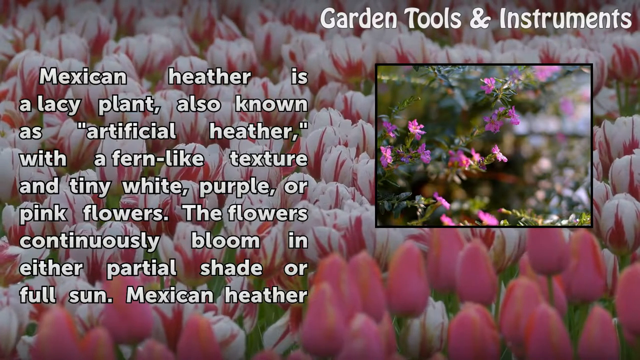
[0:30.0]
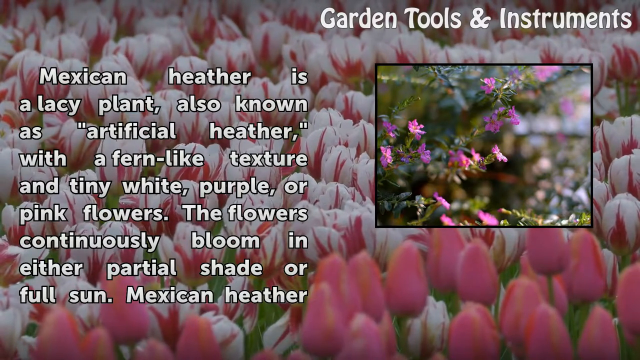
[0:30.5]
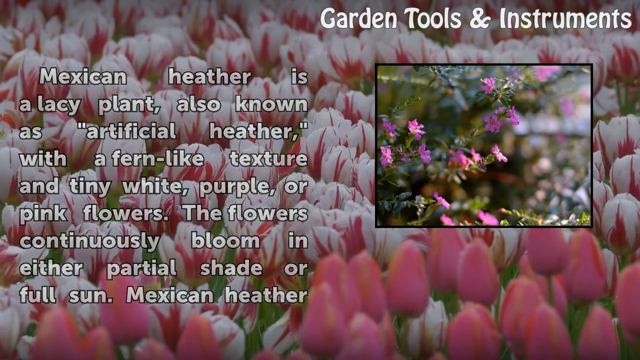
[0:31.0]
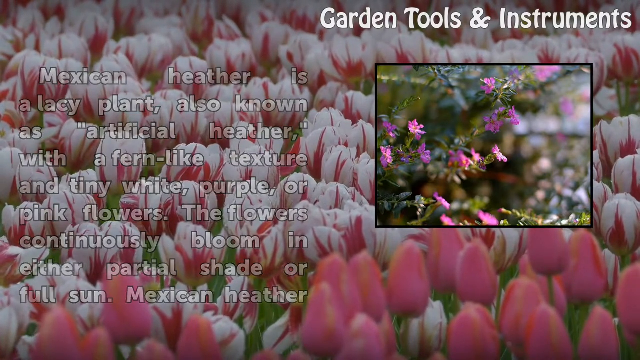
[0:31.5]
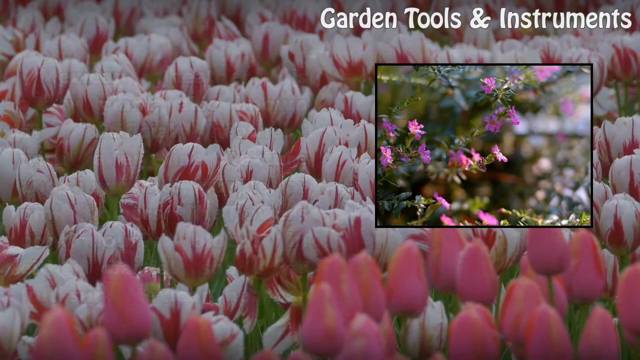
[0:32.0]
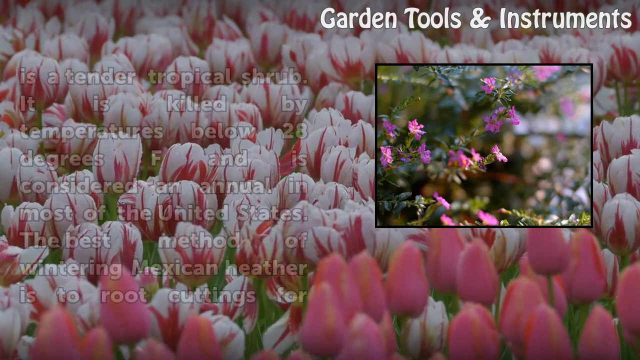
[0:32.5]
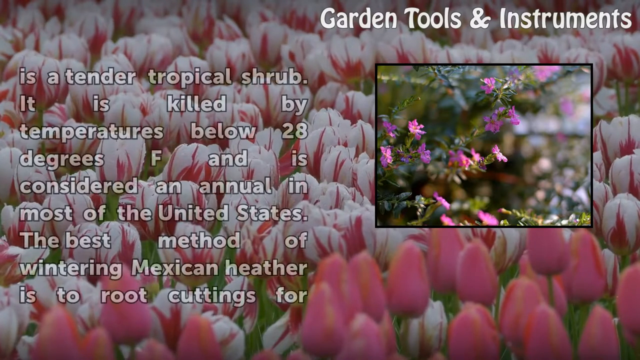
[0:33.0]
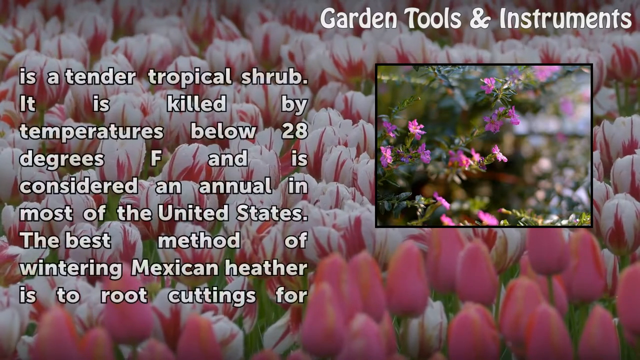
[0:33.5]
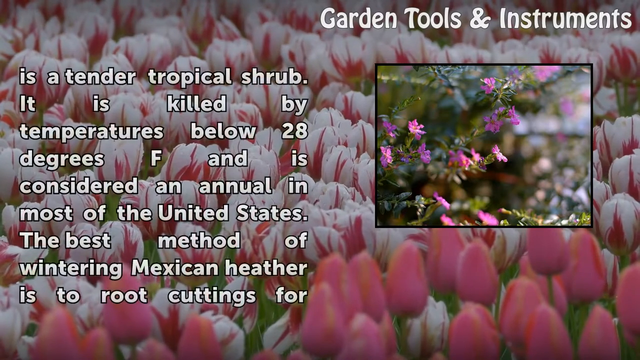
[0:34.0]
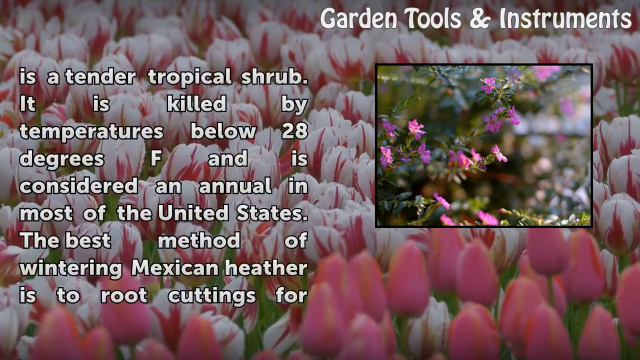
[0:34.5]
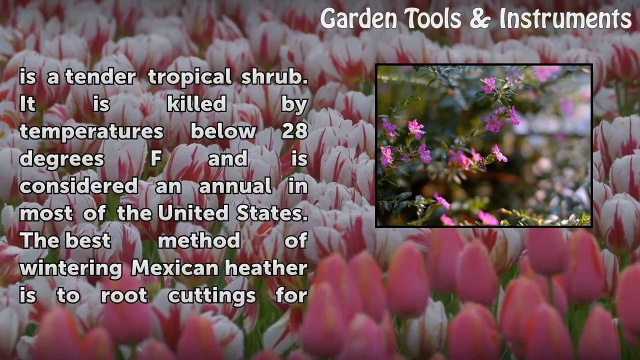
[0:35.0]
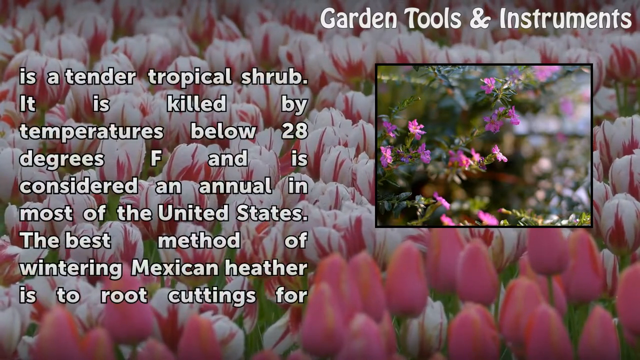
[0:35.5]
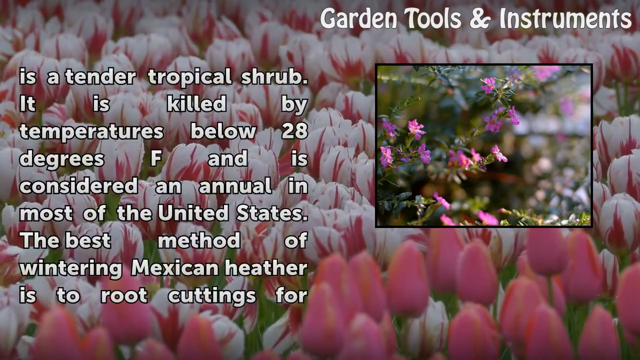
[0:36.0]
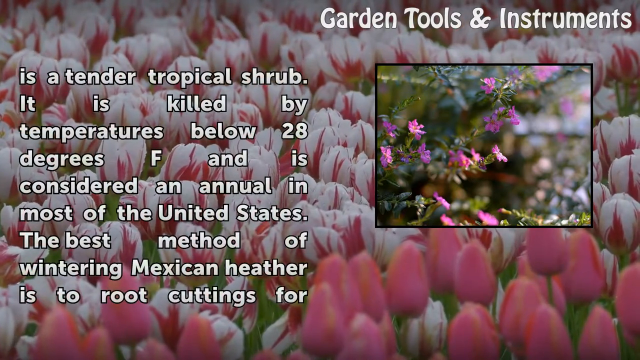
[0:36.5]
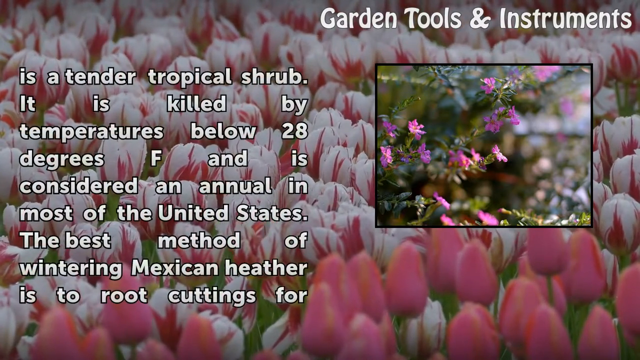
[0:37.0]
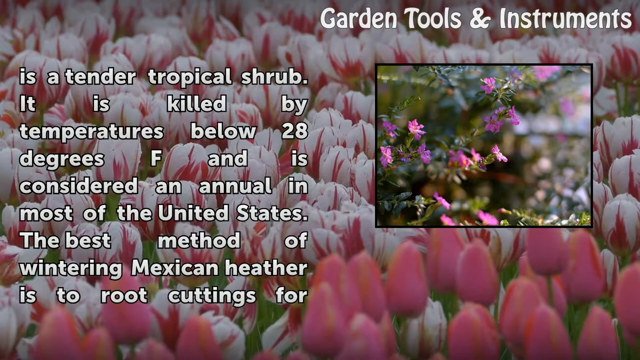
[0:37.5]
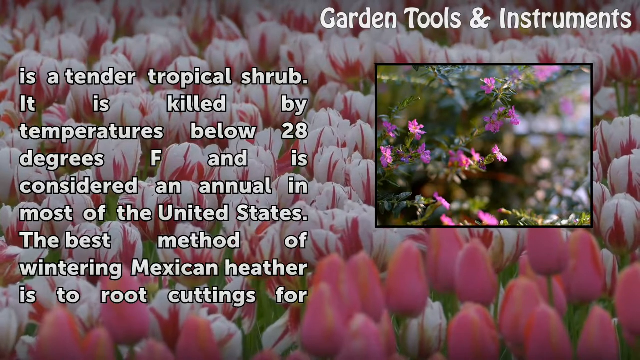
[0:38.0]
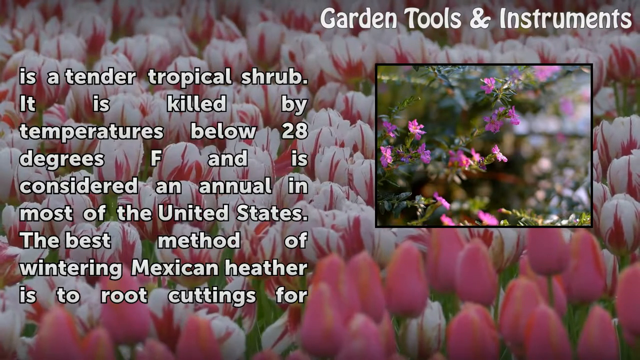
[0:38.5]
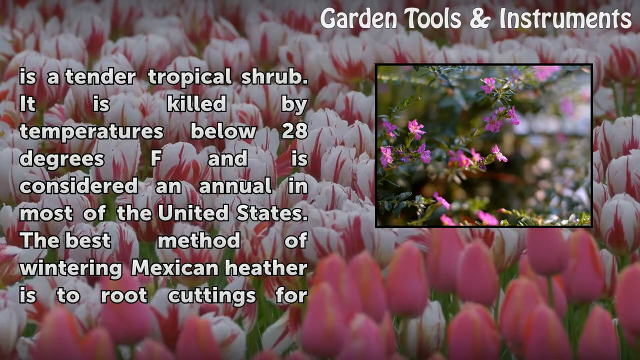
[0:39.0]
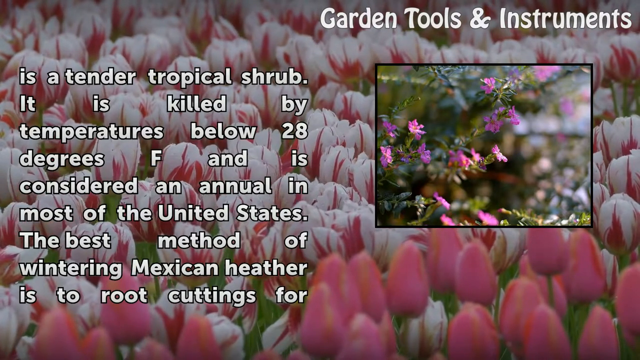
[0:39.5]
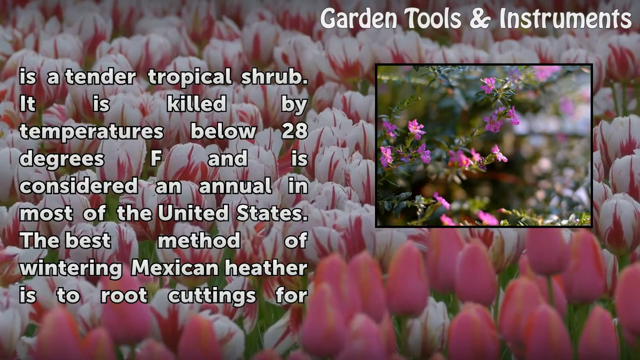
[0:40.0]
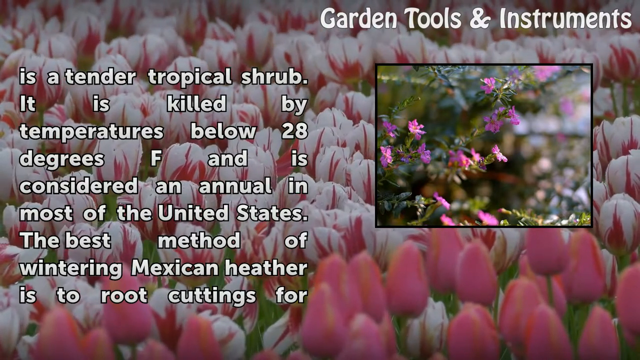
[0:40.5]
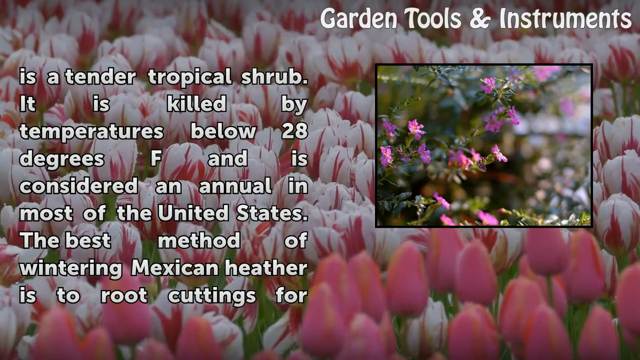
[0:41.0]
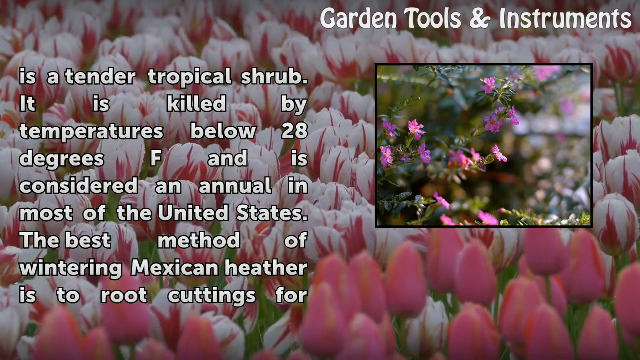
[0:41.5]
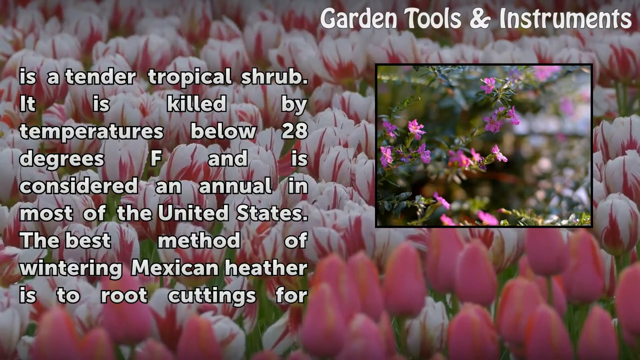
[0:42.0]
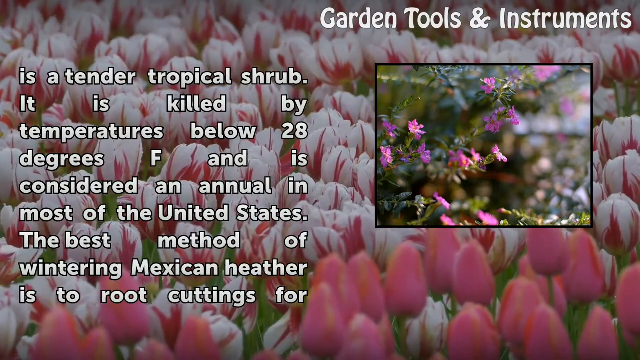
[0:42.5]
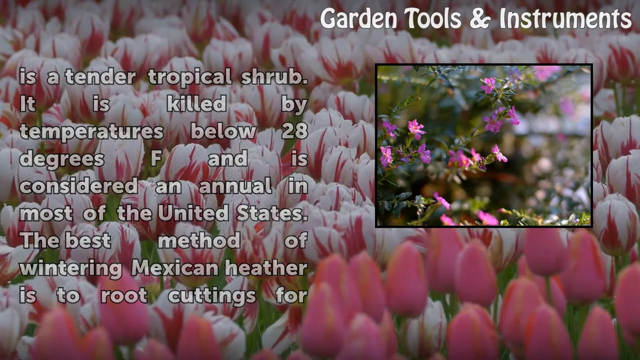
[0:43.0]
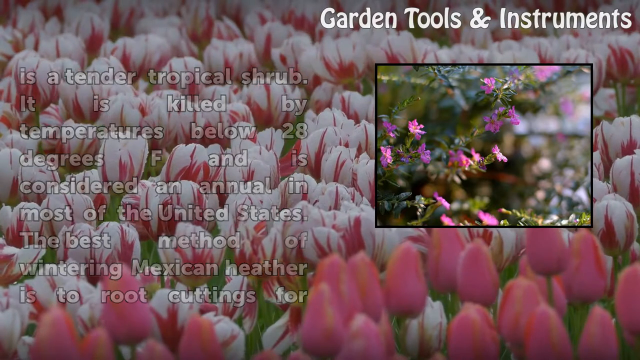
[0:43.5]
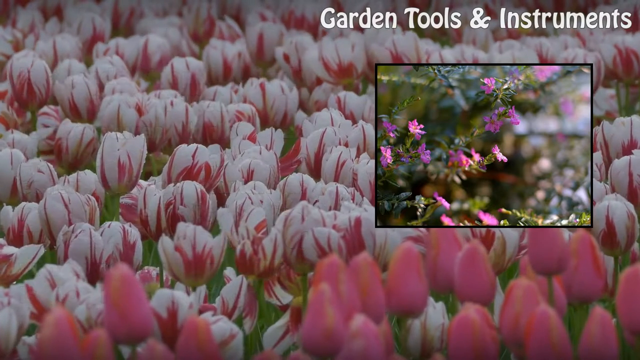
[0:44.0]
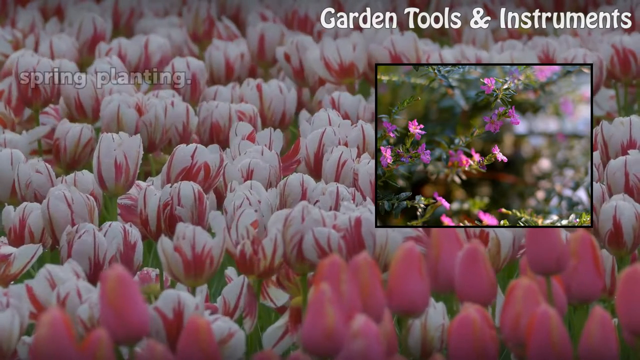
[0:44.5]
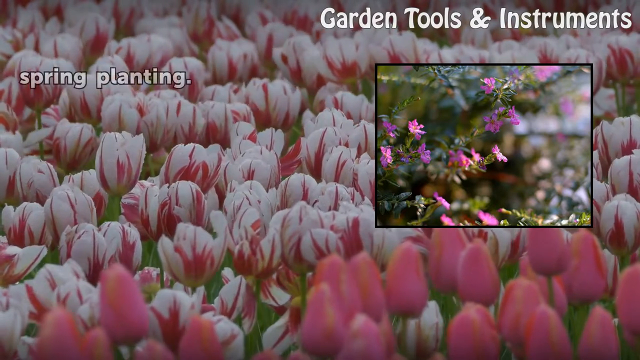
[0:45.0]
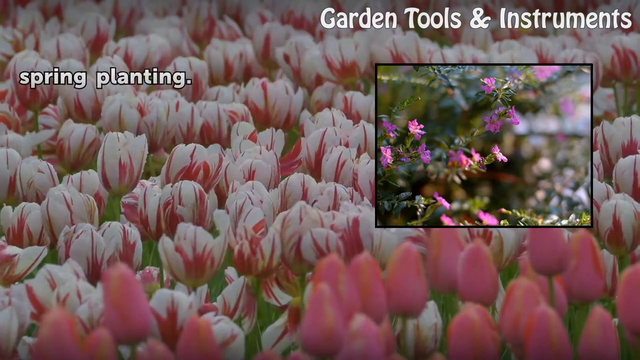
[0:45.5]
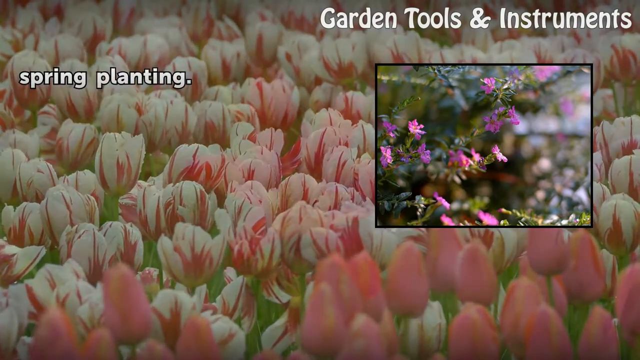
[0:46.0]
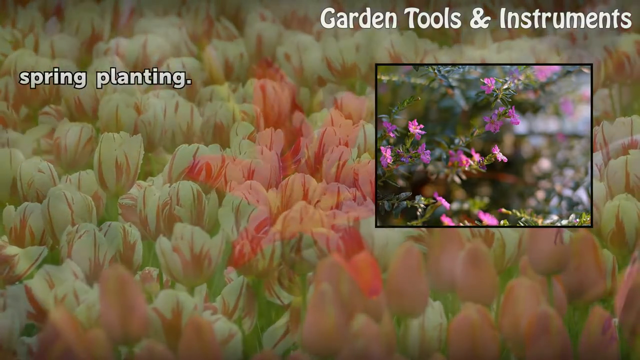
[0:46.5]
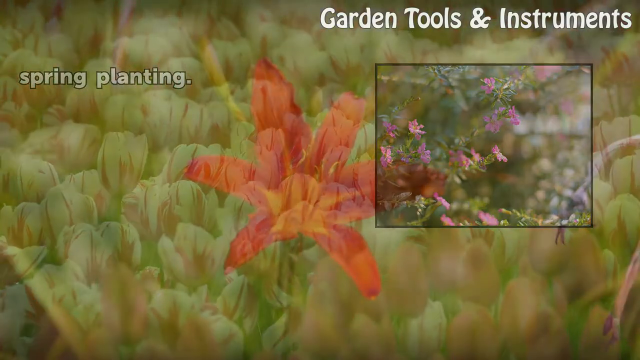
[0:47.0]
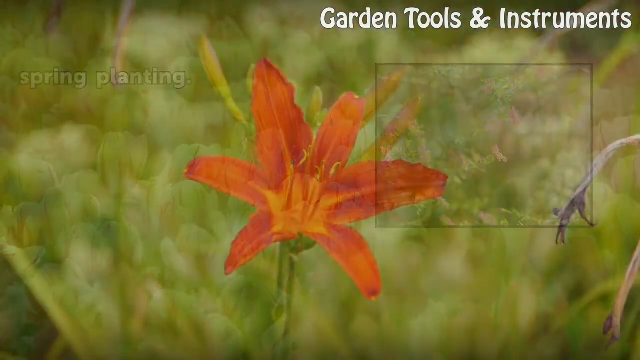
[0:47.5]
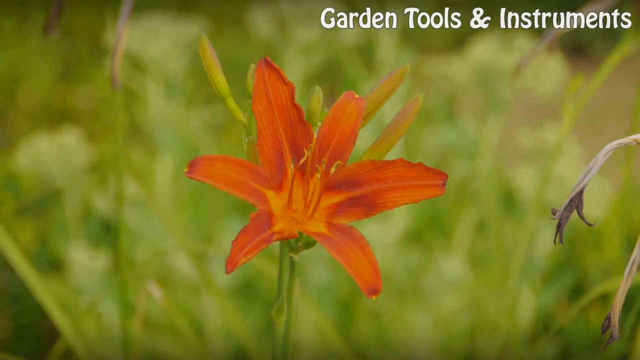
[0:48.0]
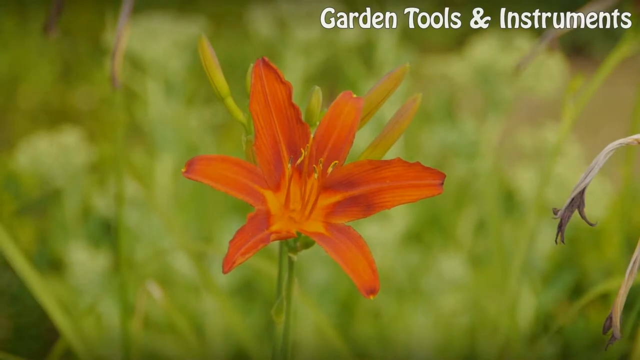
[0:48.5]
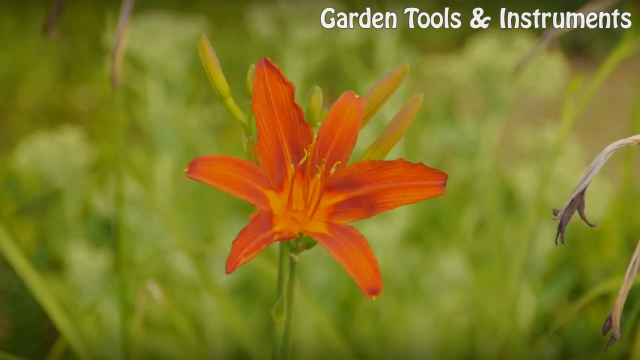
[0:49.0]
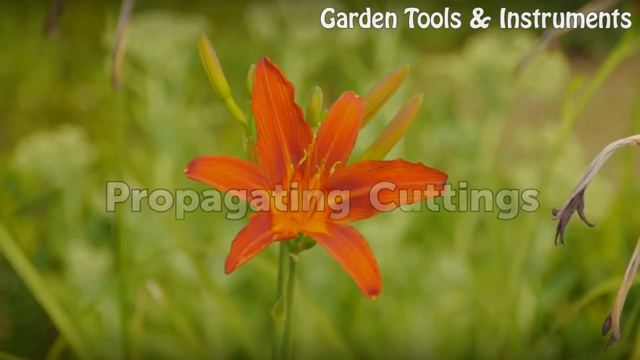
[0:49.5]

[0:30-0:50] Flowers fill the background, and to the right is a small window with a very fine black frame containing detailed flowers that differ from those in the main background. White text in the upper right corner reads "garden tools and instruments". To the left is white text reading "Mexican heather is a lacy plant also known as artificial heather with a fern-like texture and tiny white purple or pink flowers. The flowers continuously bloom in either partial shade or full sun", followed by "Mexican heather is a tender tropical shrub. It is killed by temperatures below 28 degrees F and is considered an annual in most of the United States. The best method of wintering Mexican heather is to do root cuttings for spring planting." The scene then changes to a close-up of an orange flower with six petals, with the words "propagating cuttings" superimposed in a large white font with a very fine black border.